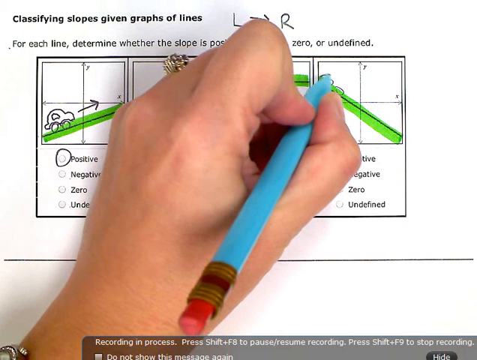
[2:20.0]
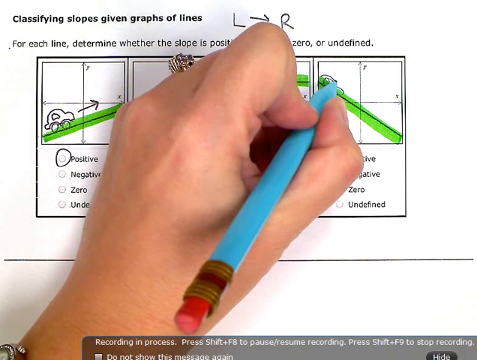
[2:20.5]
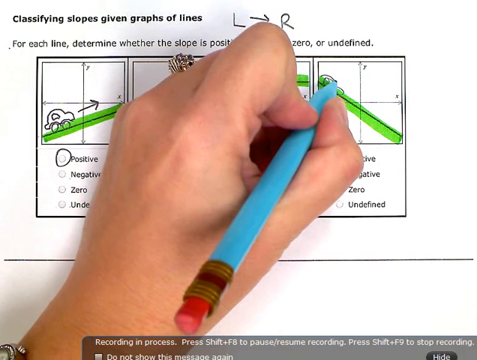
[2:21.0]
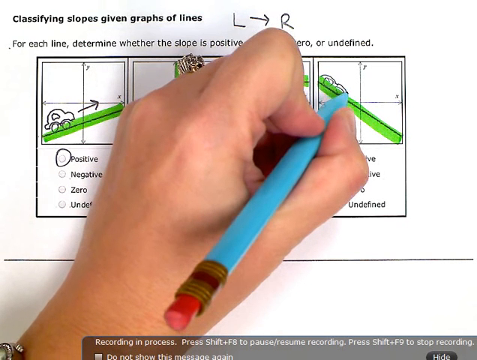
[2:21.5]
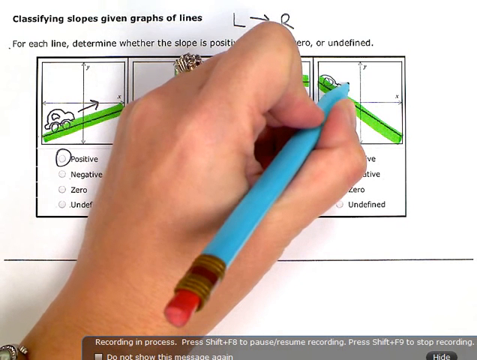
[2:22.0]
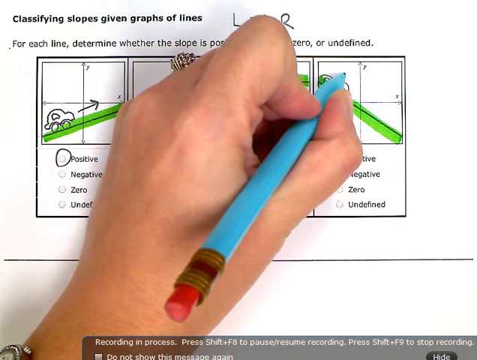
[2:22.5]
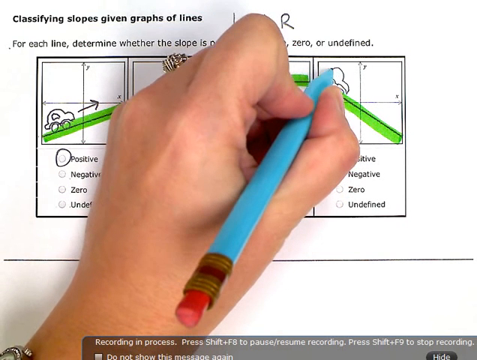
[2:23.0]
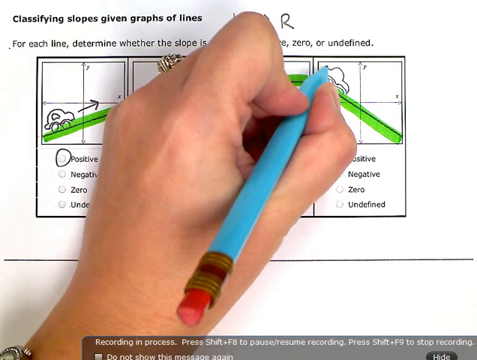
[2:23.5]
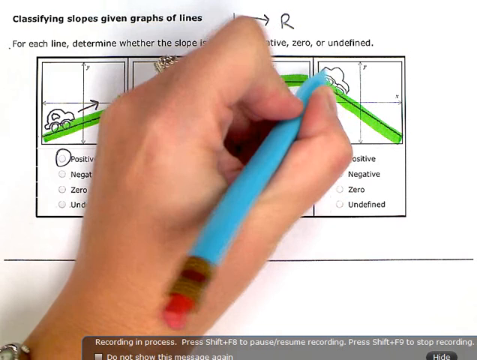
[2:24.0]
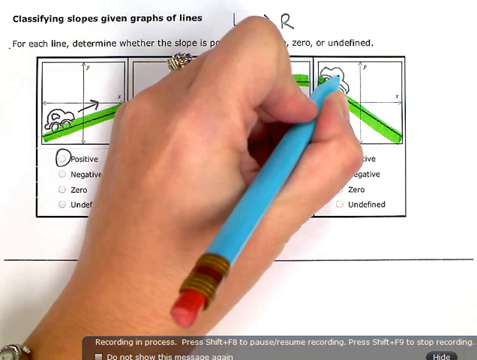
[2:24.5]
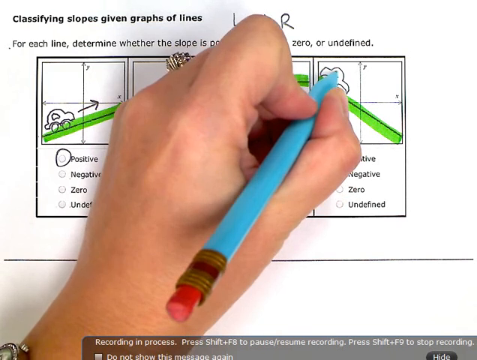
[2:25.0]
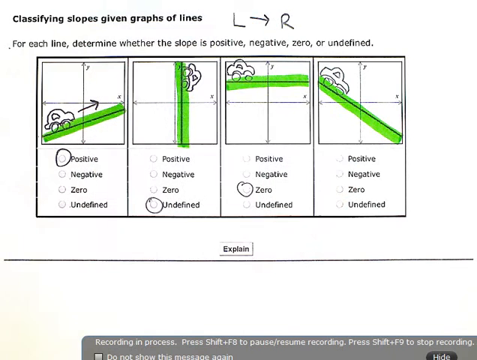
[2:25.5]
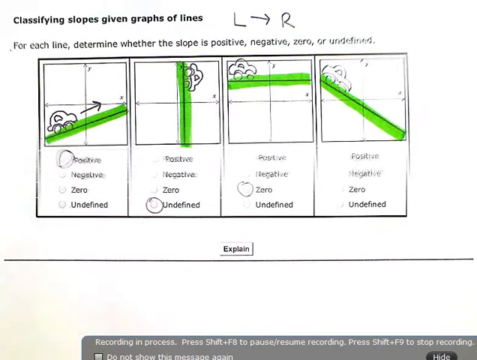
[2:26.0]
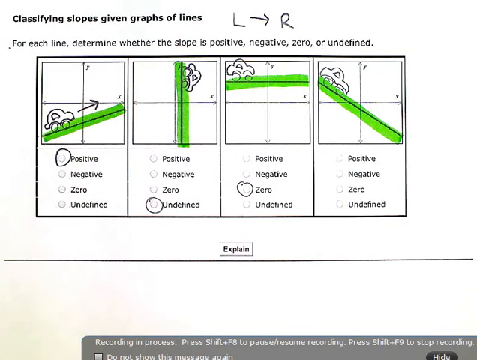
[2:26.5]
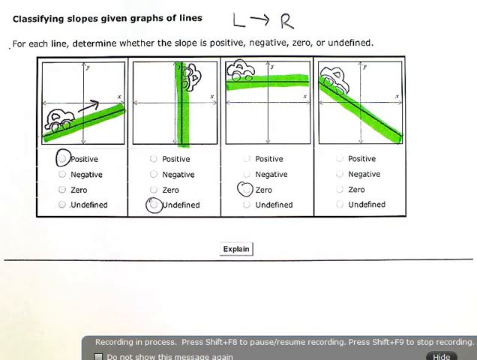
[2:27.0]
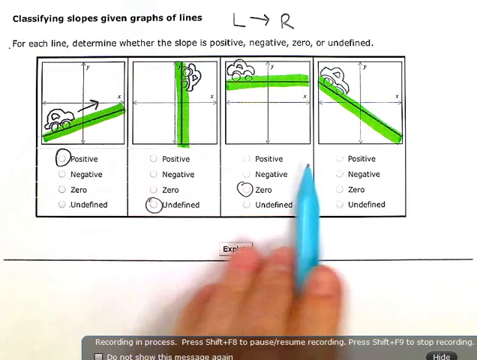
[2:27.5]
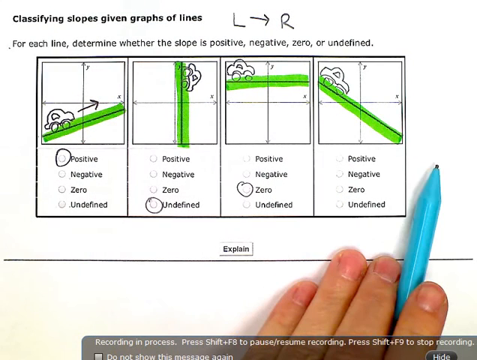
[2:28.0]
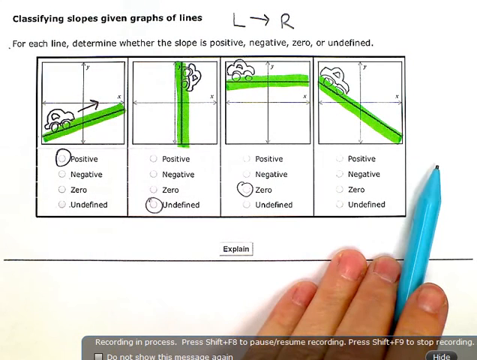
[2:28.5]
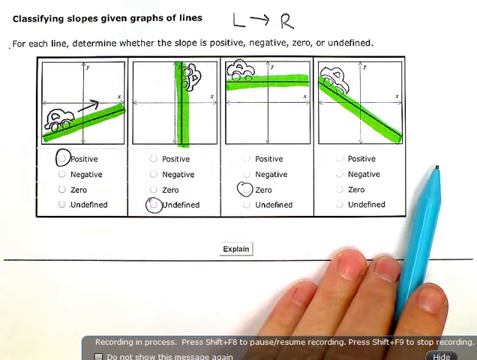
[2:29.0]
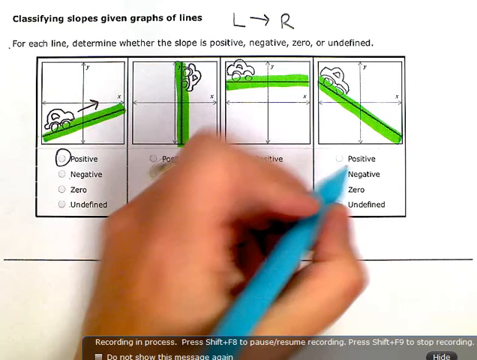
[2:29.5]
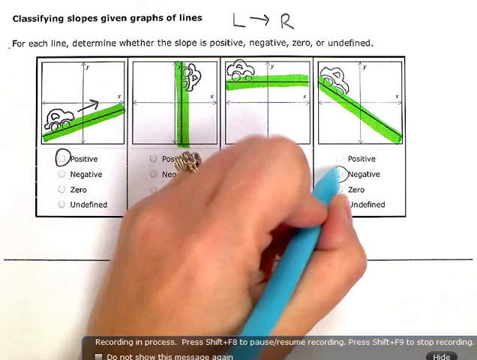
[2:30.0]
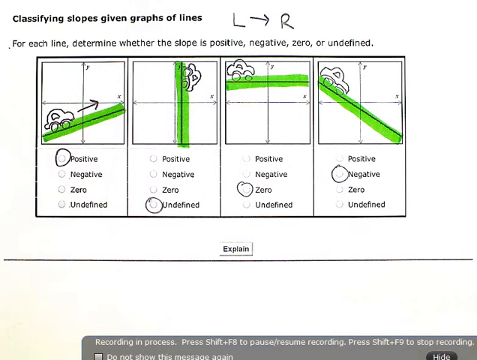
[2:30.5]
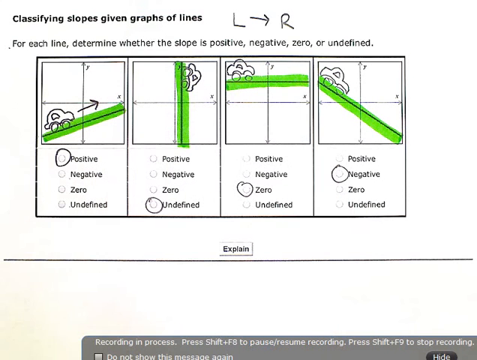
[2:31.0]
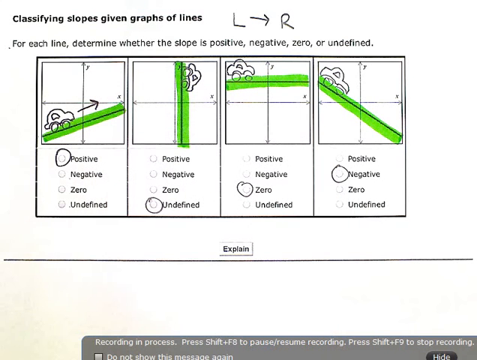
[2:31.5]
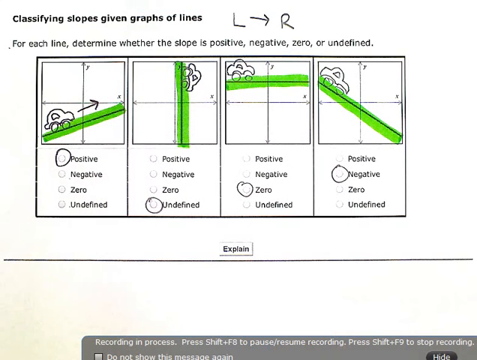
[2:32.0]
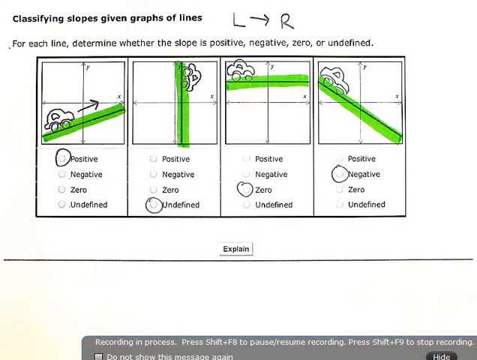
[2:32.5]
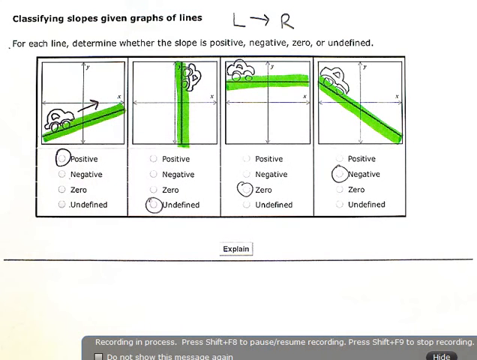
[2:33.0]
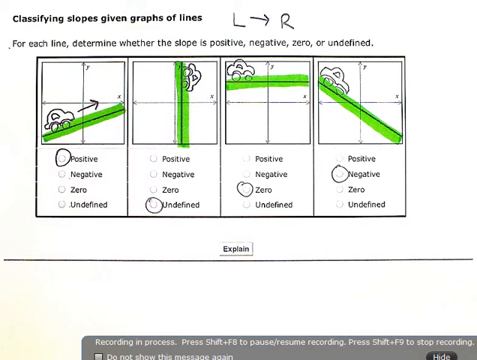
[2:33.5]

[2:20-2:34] A child's hand holds a bright blue pencil with a rubber on the end. The child is working on a worksheet with the heading "classifying slopes given graphs of lines" and the words "for each line determine whether the slope is positive, negative, zero or undefined" underneath. She has answered the first question as positive, the second as undefined and the third as zero, and appears to be working out the final slope. She chooses negative for the fourth problem and circles it in the bottom part of the box. She has drawn a little car on the line in each box, with an arrow pointing to the right.